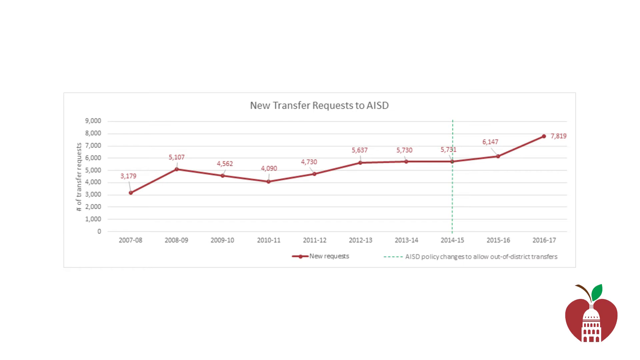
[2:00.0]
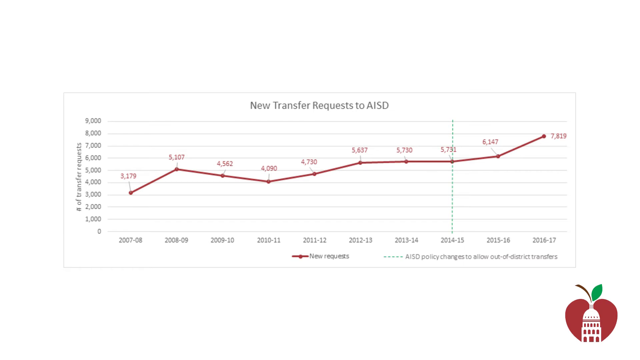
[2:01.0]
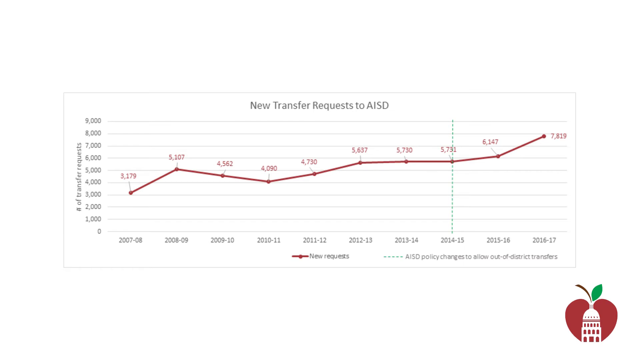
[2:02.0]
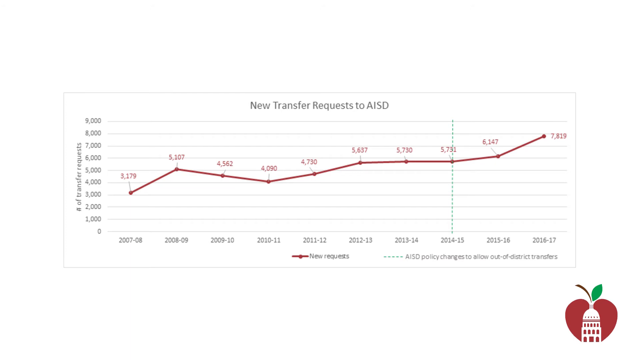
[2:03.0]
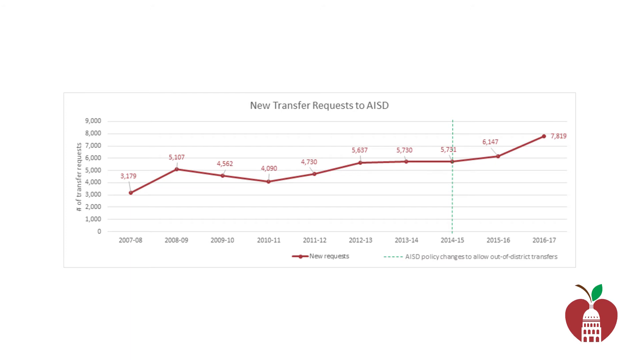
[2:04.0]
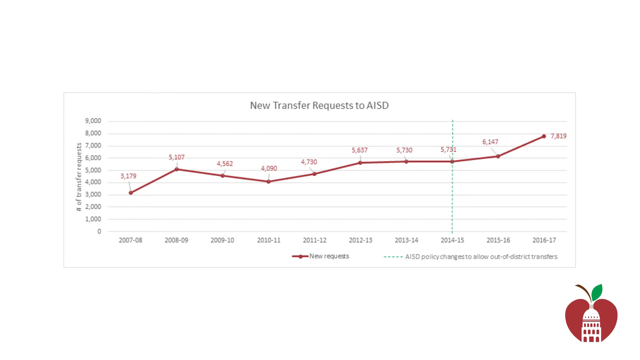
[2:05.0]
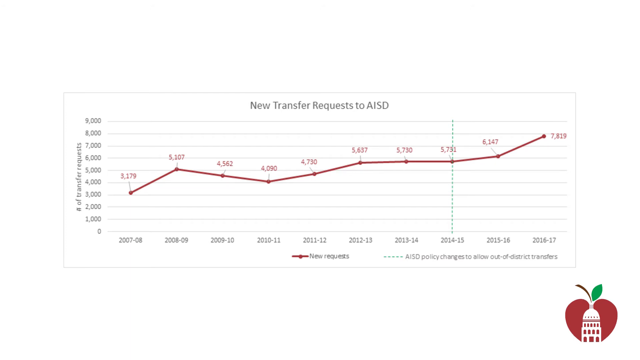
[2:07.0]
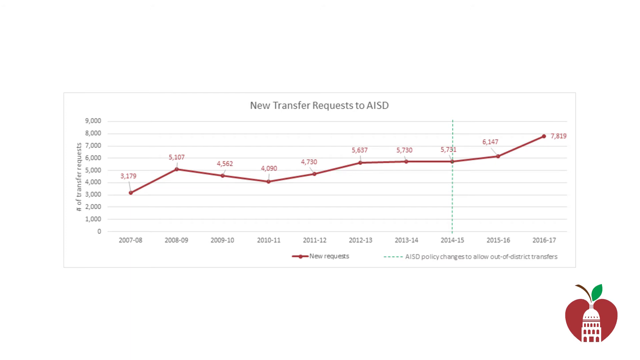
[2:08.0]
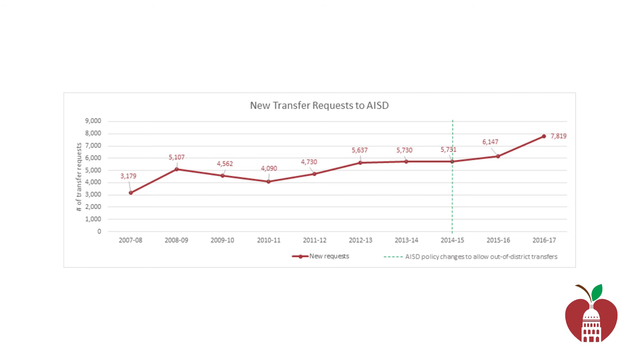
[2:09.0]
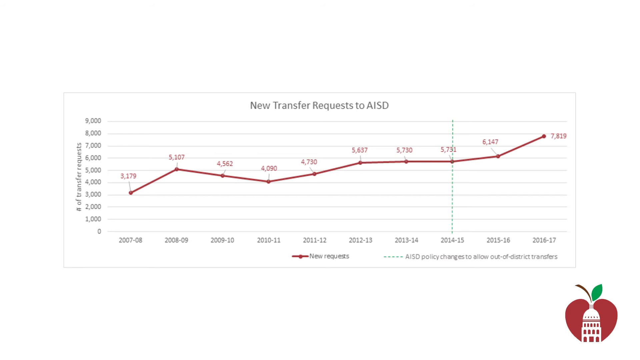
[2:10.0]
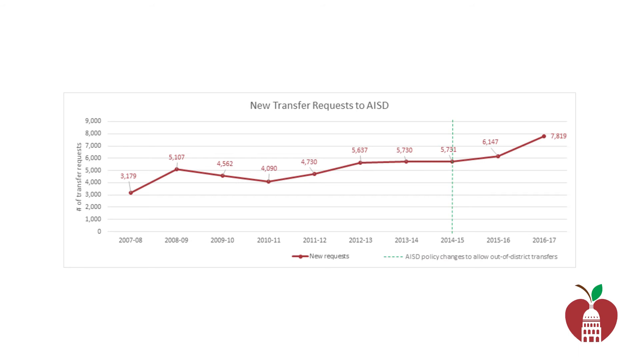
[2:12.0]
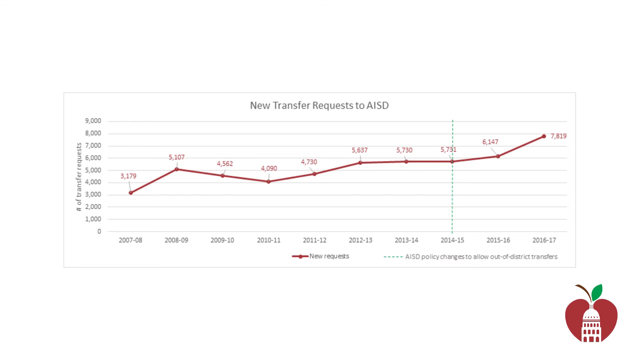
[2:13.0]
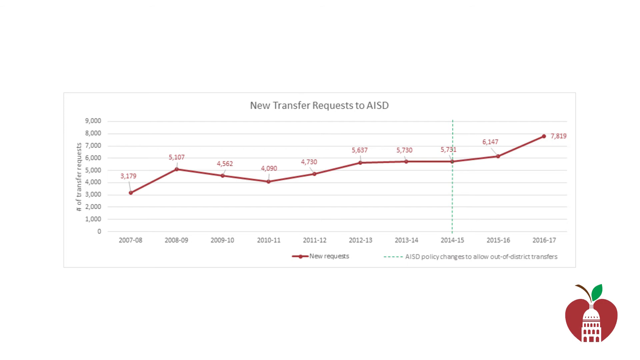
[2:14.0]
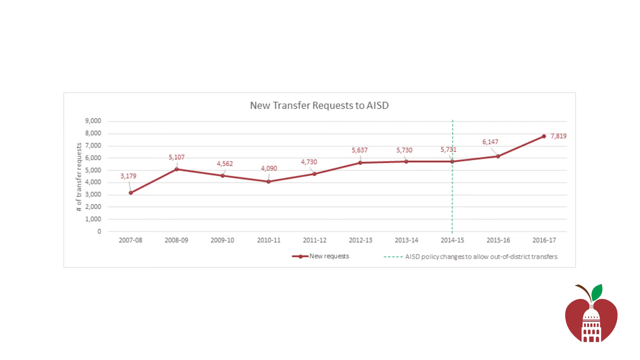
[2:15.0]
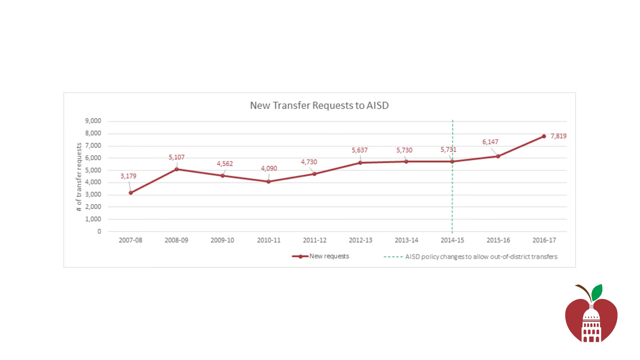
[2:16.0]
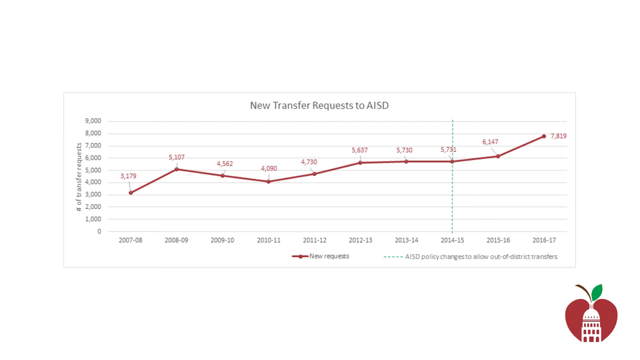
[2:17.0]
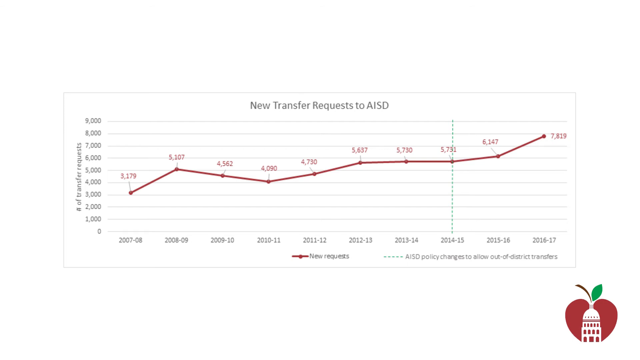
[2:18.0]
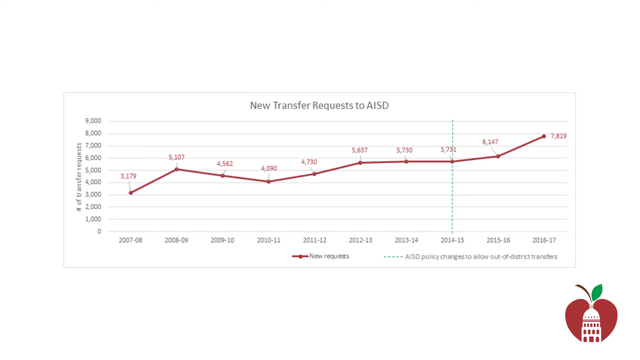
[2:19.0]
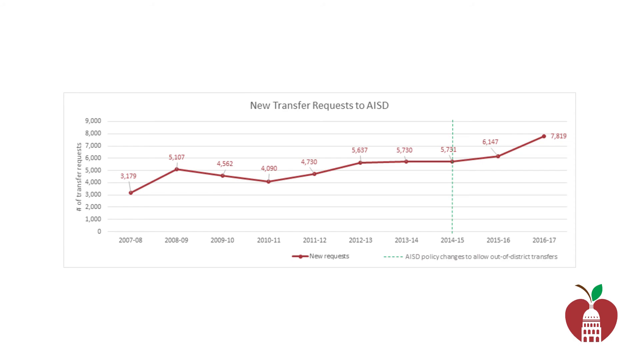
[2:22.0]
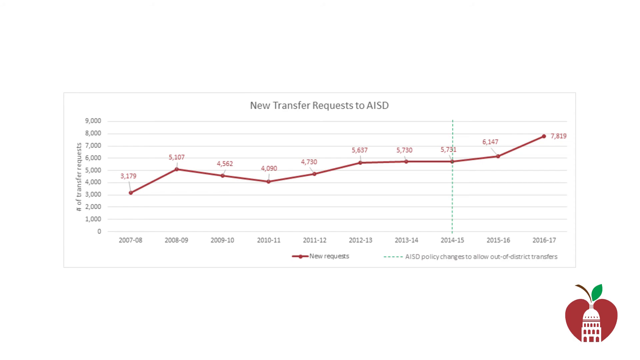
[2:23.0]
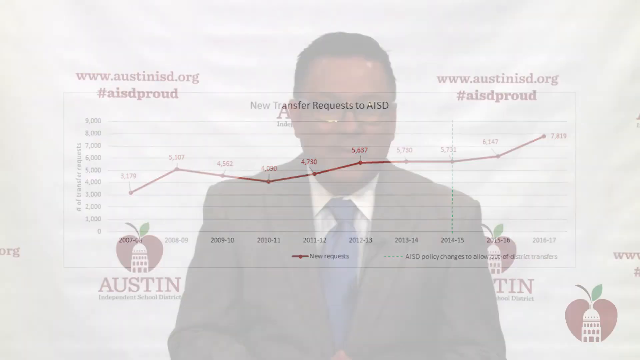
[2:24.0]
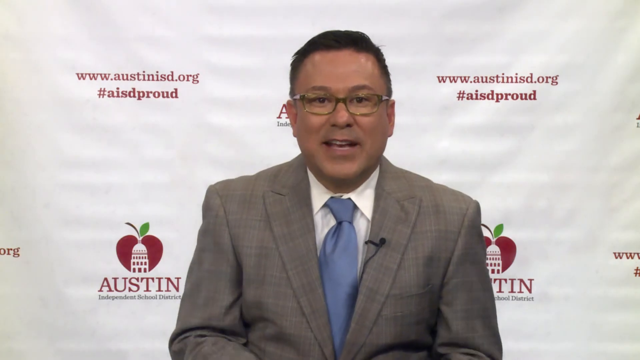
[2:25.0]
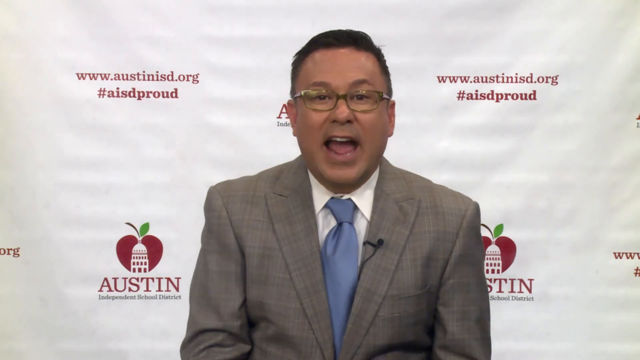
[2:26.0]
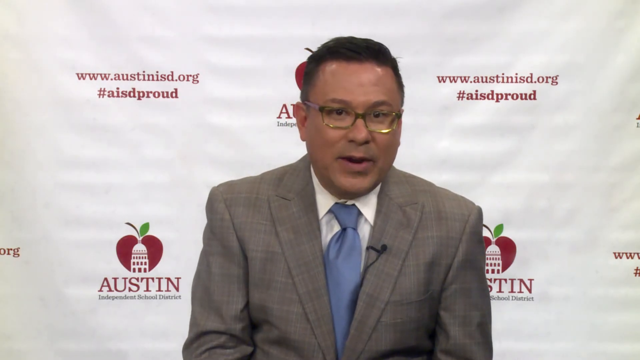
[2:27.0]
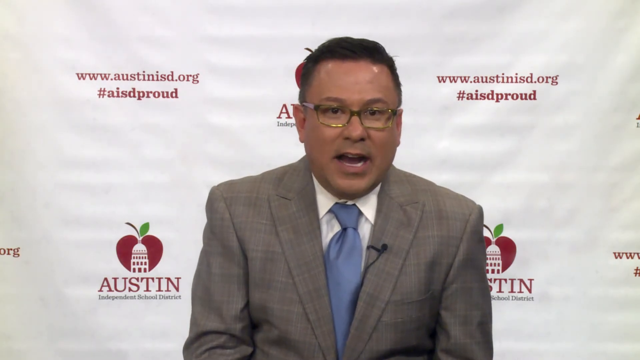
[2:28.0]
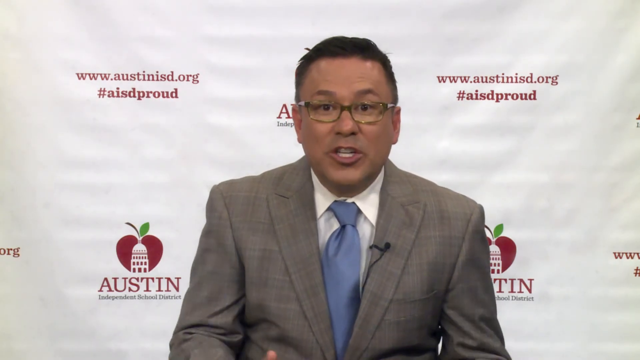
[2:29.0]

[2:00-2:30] A chart reads "new transfer requests to AISD from 2007 to 2017." It starts at 3,179 in 2007–2008 and reaches 7,819 in 2016–2017, showing the number of requests per year growing over the years. A man who looks like a superintendent or something similar then appears on screen, wearing something like a gray jacket or blazer, a white shirt, a blue tie and glasses, with a small microphone clipped to his blazer. He is talking.